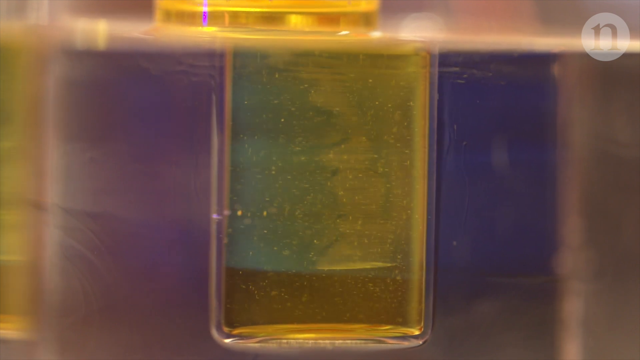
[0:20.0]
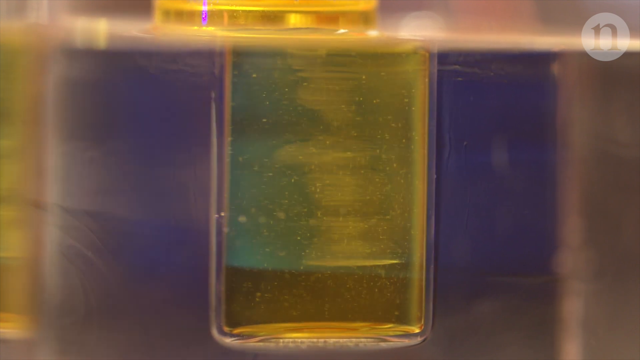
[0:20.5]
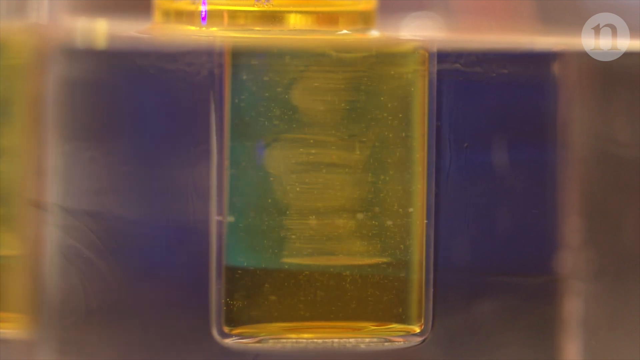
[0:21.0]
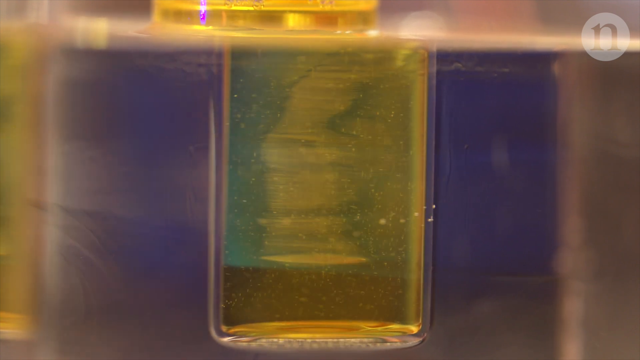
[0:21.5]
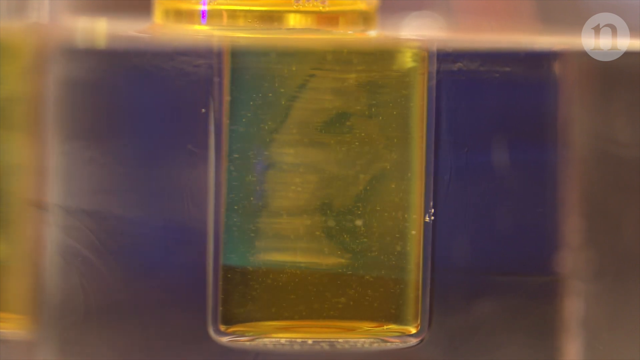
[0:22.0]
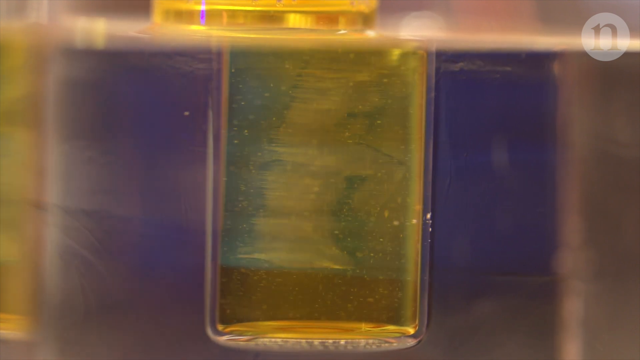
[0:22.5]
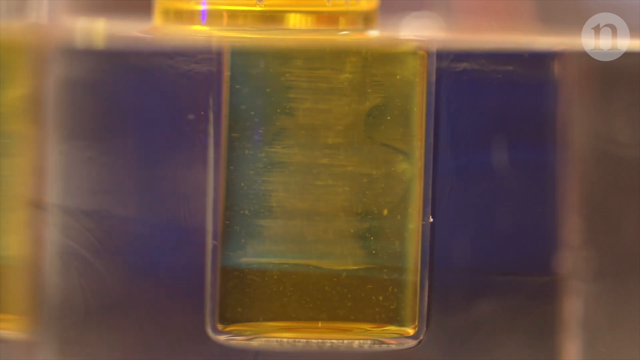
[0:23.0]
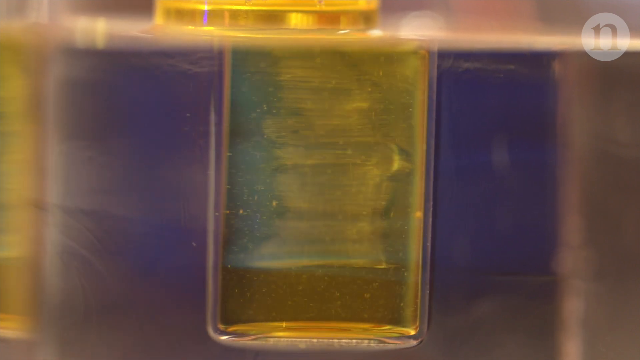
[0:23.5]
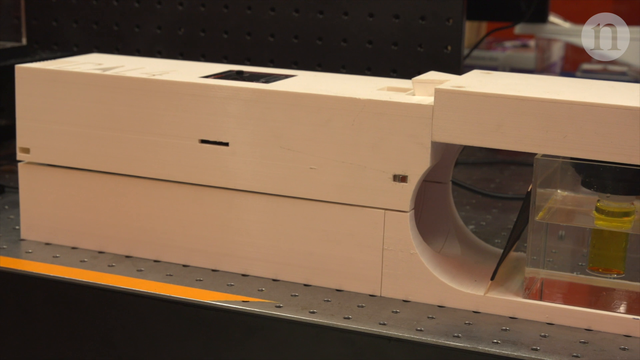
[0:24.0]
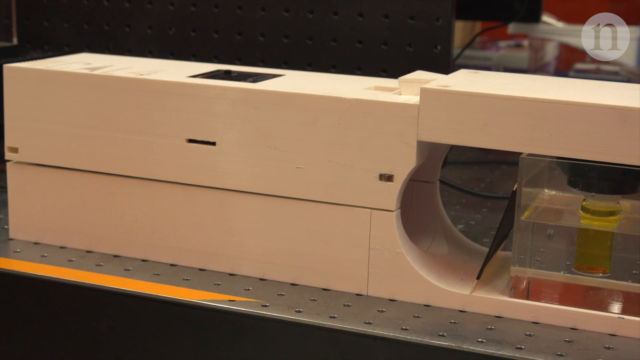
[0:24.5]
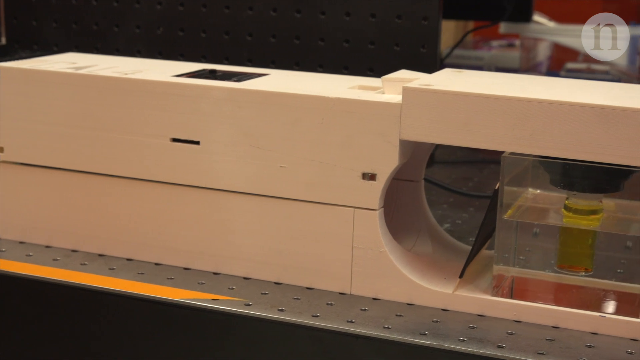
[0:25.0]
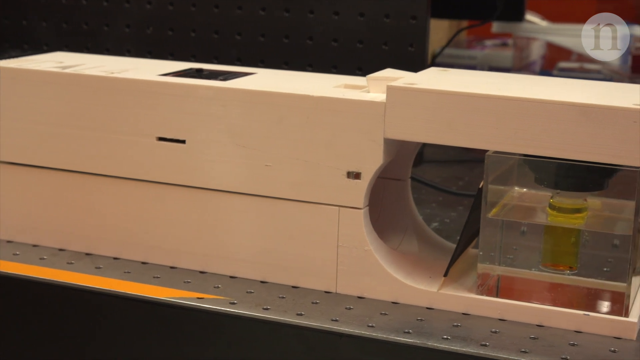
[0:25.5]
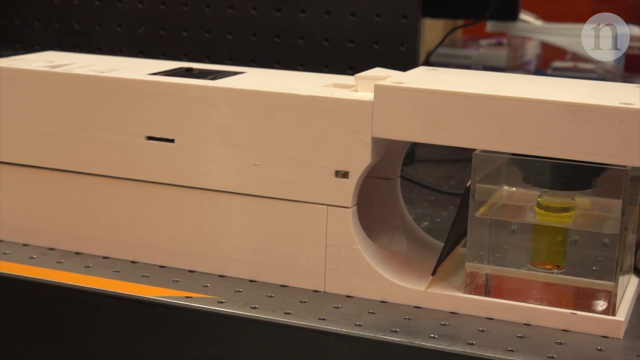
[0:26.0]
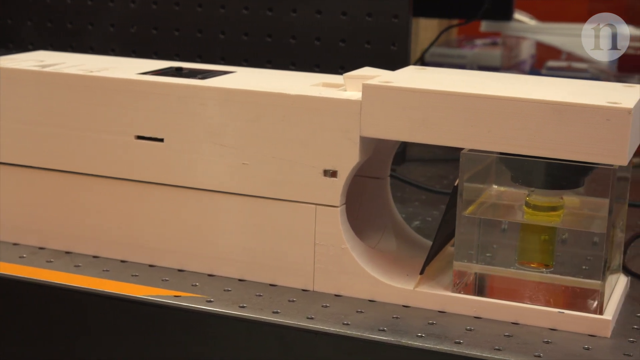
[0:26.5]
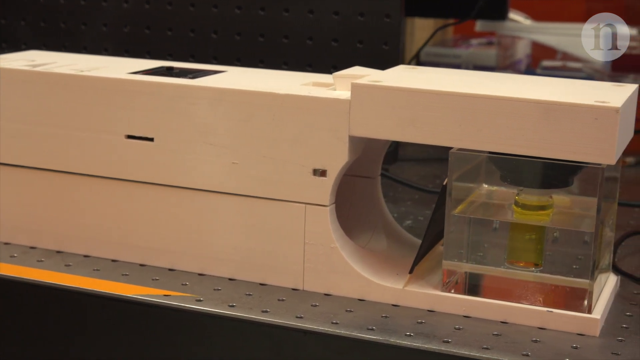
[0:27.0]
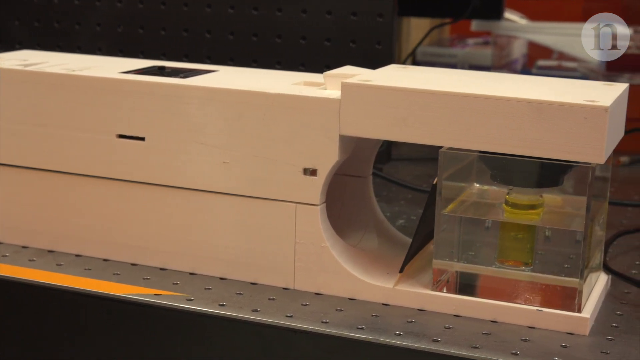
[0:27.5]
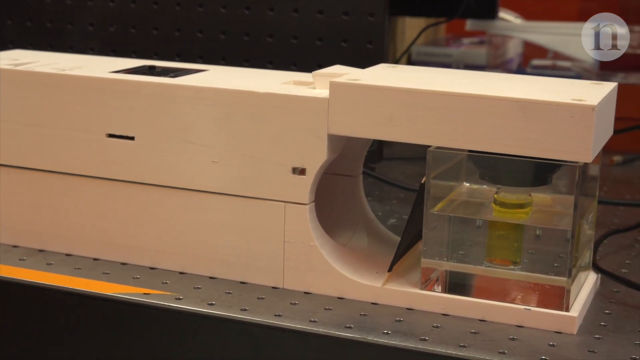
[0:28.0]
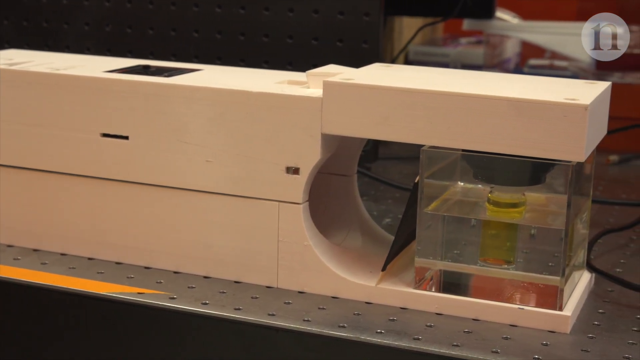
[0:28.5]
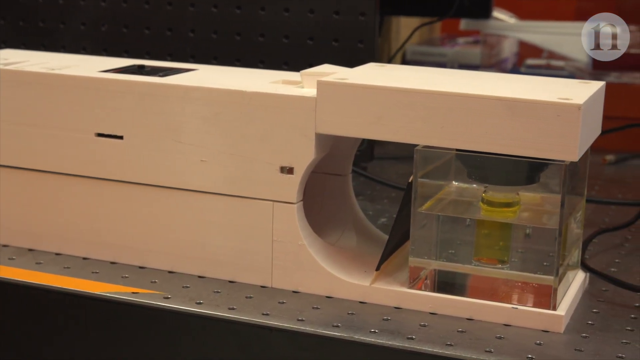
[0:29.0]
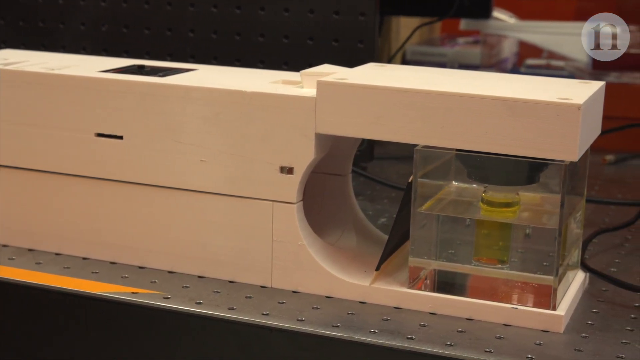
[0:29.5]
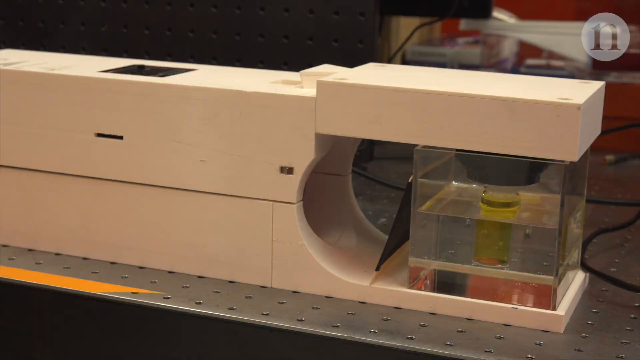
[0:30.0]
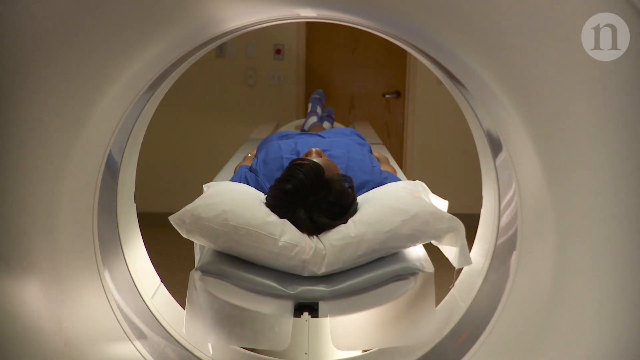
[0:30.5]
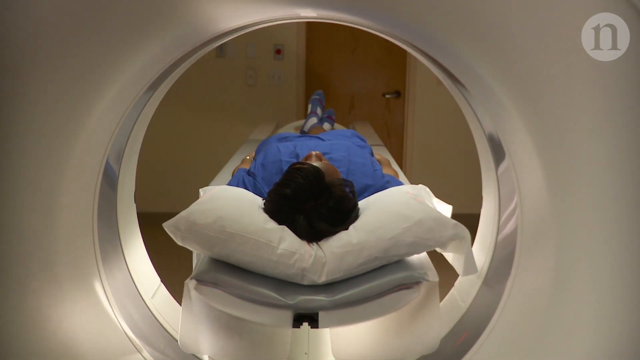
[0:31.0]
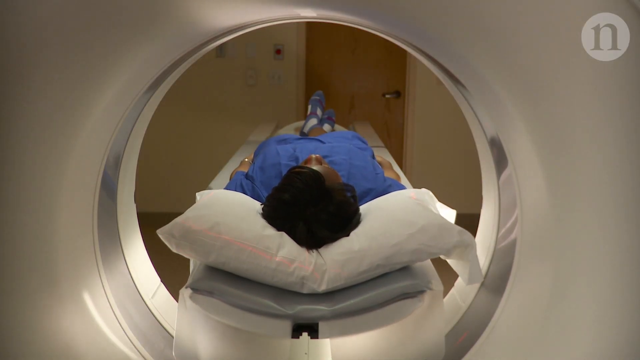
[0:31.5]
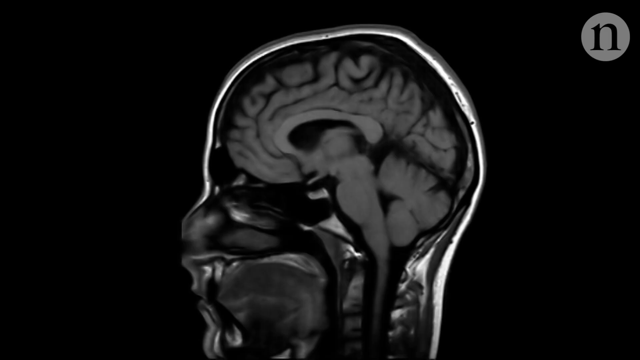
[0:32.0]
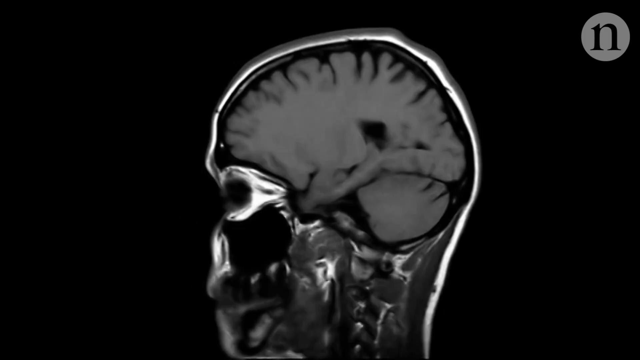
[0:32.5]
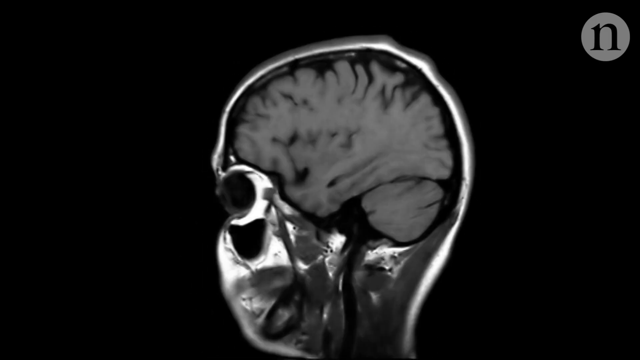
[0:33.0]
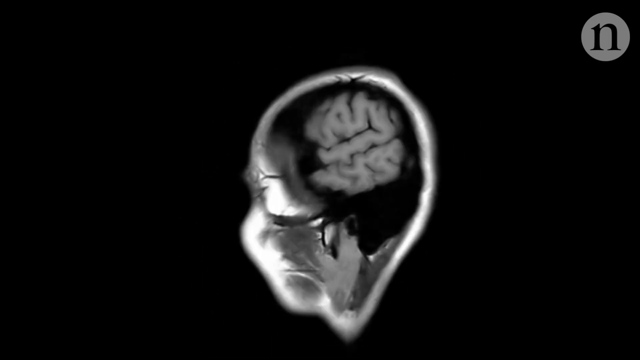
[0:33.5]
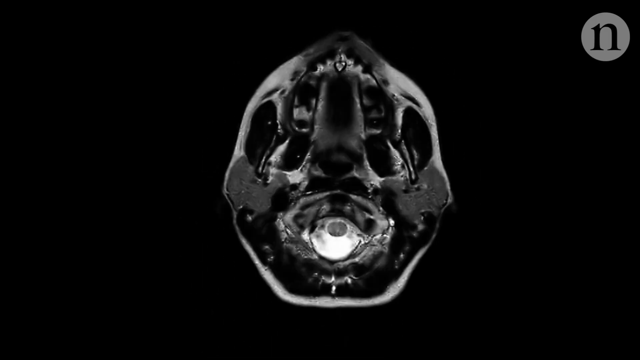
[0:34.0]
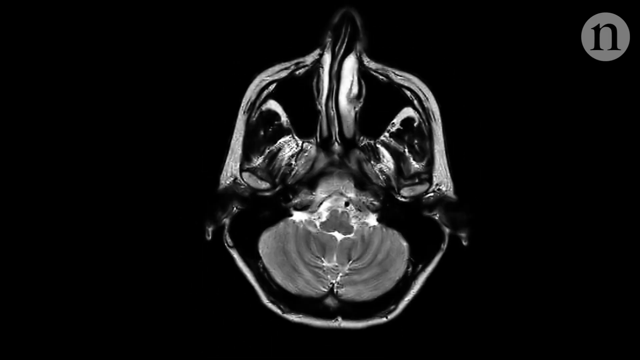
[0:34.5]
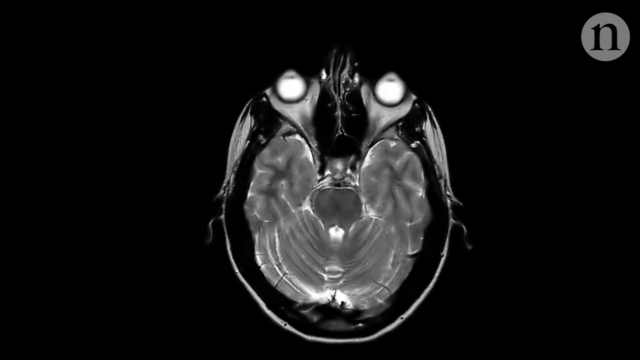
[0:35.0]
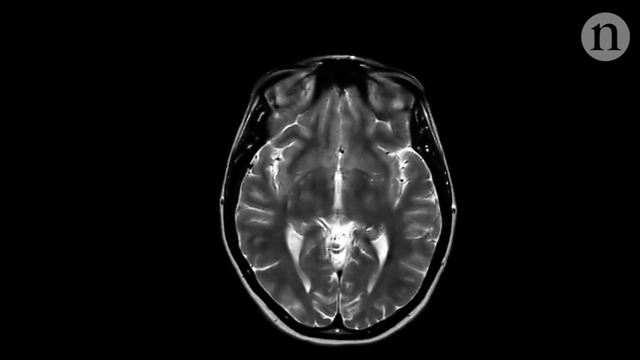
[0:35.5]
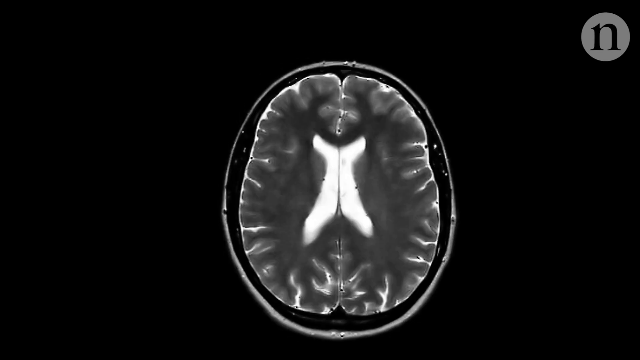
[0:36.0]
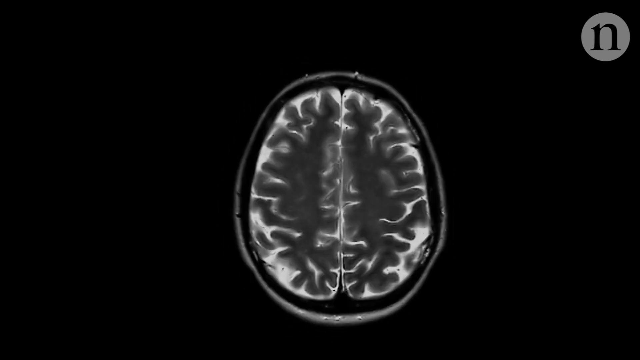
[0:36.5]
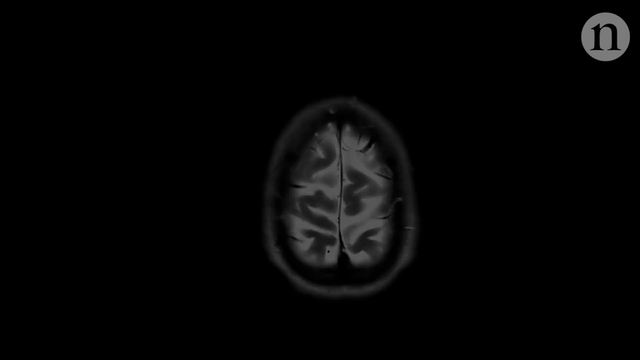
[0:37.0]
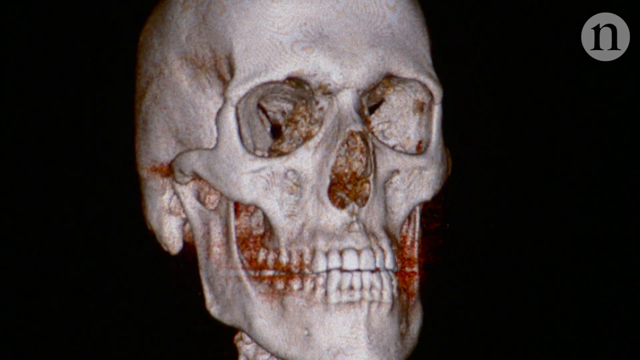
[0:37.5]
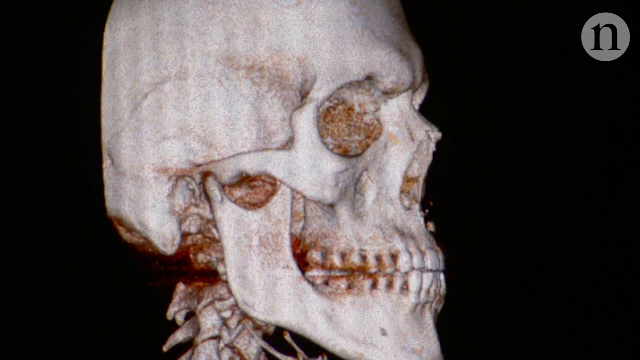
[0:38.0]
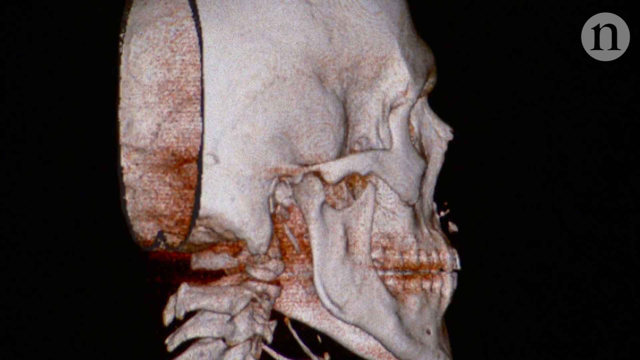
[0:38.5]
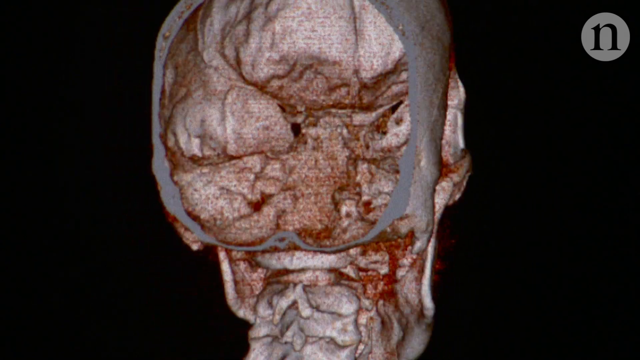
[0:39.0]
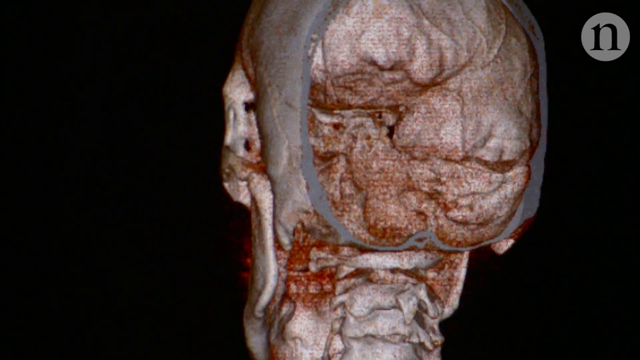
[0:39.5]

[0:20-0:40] What seems to be water appears, and it is yellow. Next comes a machine of an unclear kind. A man is lying down in a machine that seems to be a scanner, which scans his head, and then the result of the scan is shown.